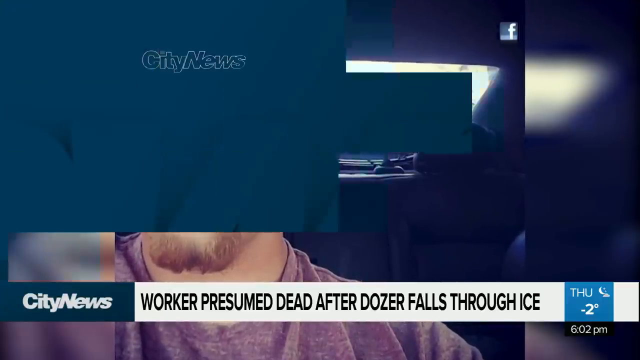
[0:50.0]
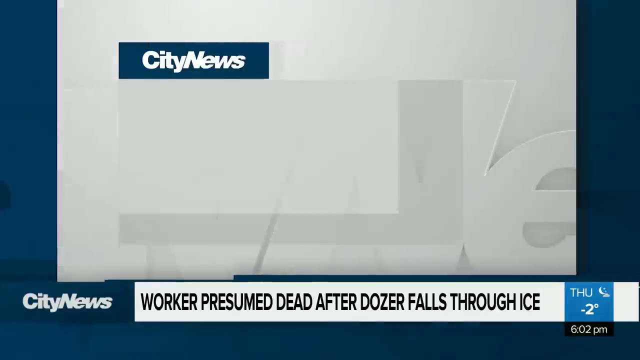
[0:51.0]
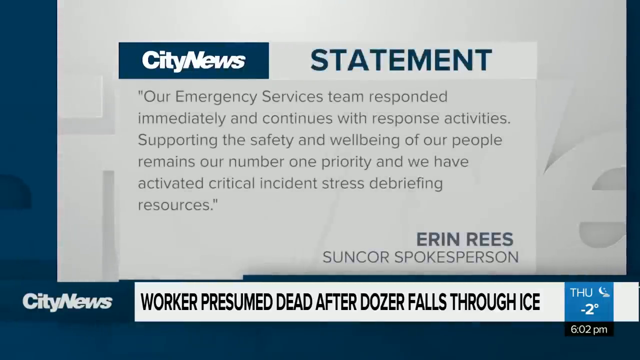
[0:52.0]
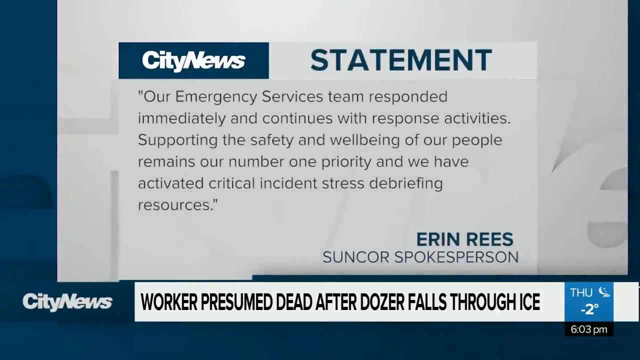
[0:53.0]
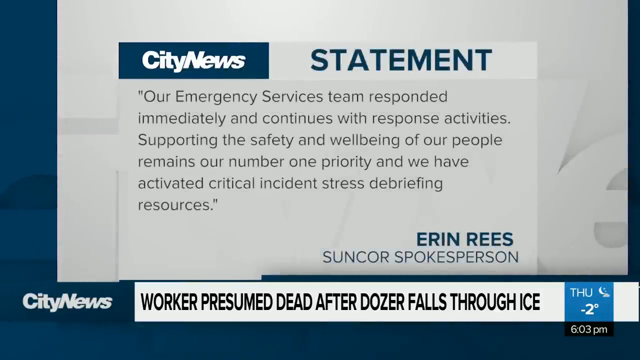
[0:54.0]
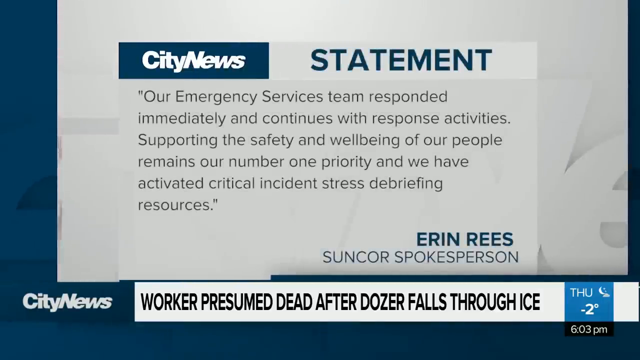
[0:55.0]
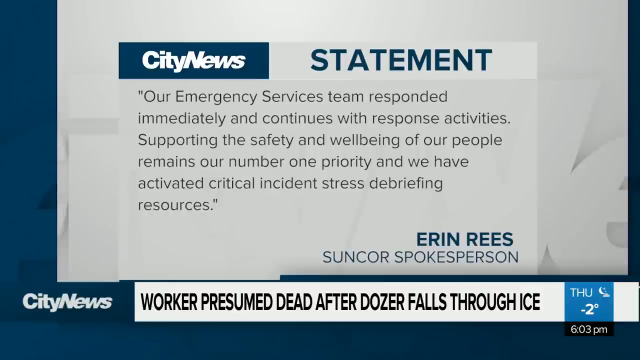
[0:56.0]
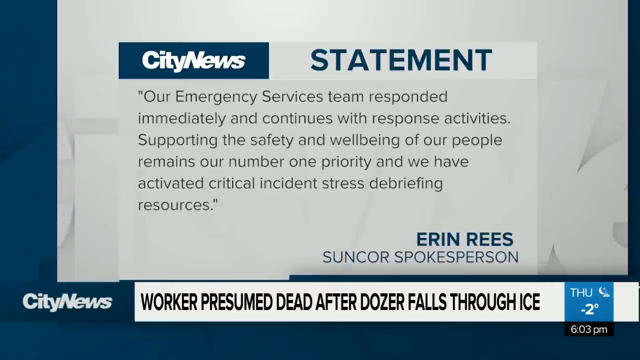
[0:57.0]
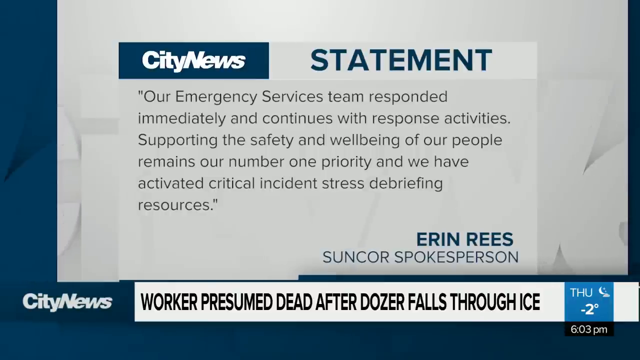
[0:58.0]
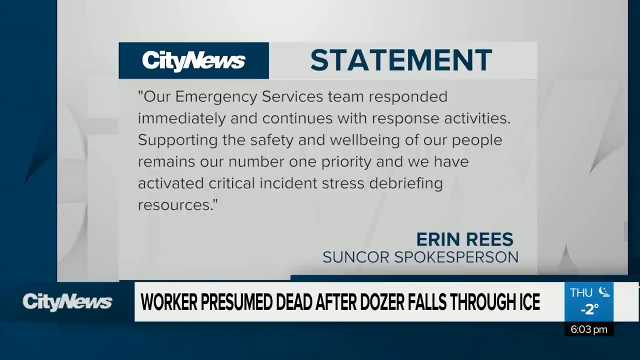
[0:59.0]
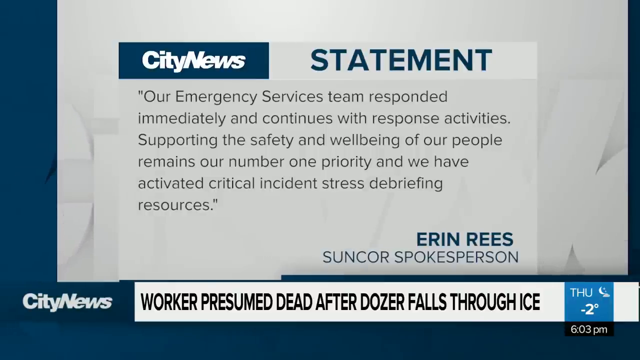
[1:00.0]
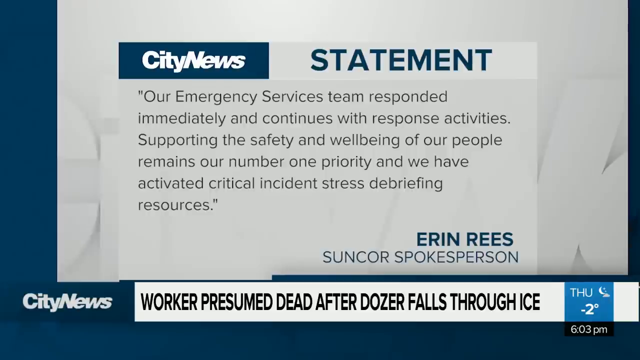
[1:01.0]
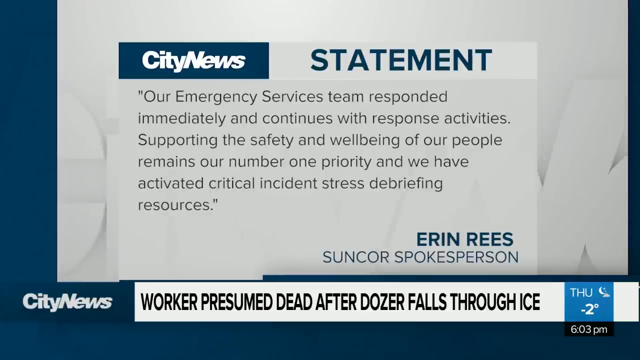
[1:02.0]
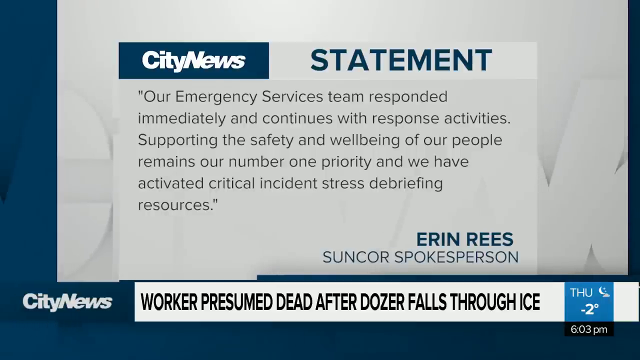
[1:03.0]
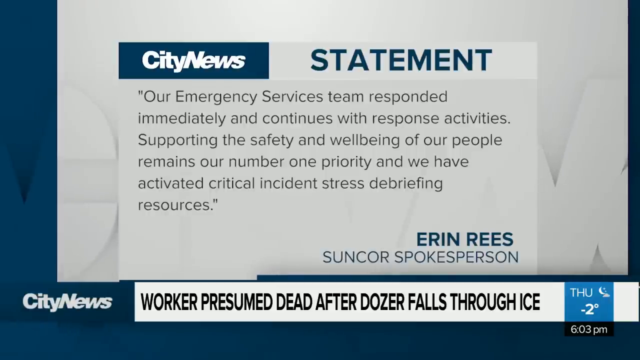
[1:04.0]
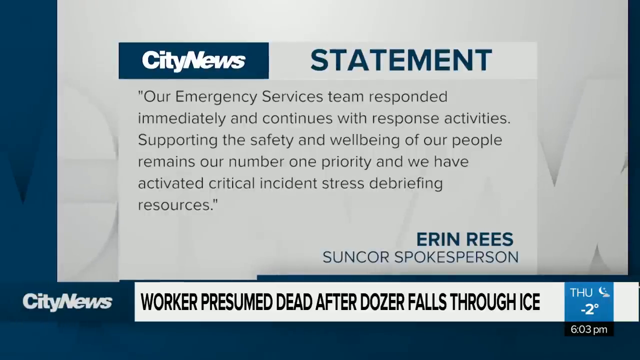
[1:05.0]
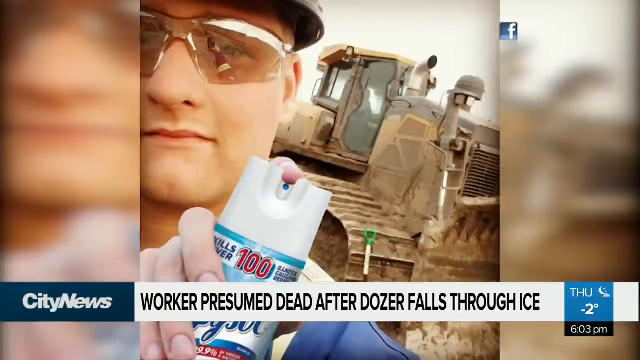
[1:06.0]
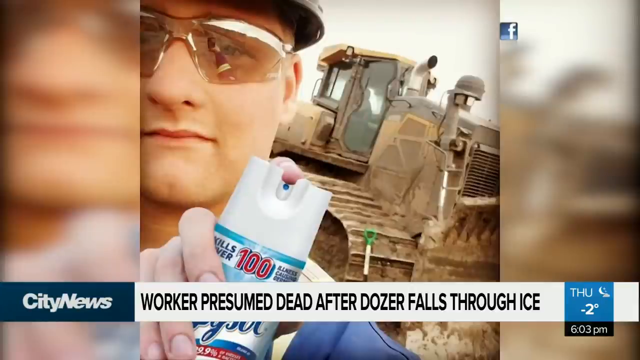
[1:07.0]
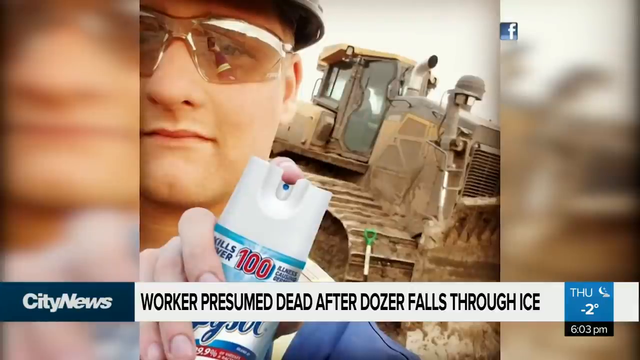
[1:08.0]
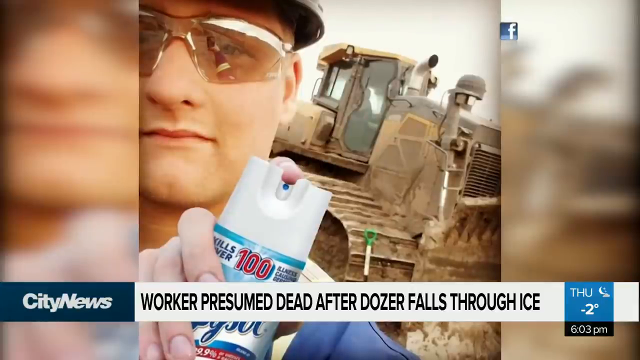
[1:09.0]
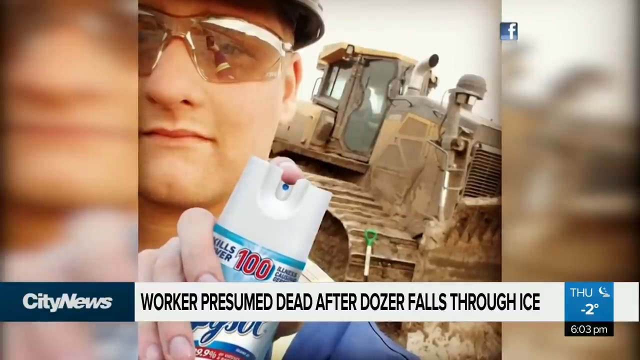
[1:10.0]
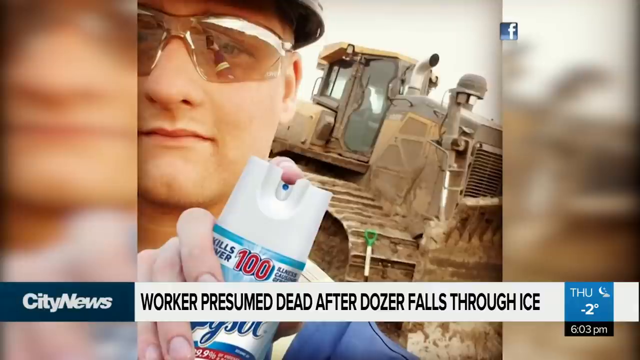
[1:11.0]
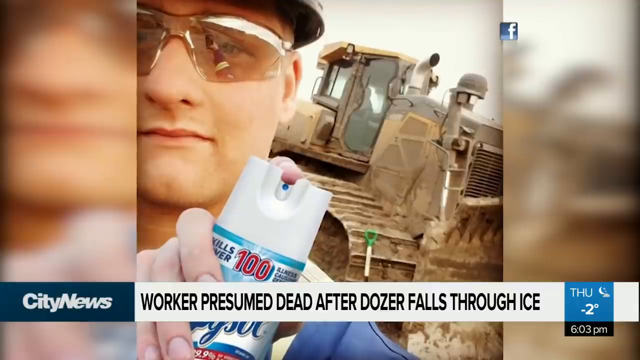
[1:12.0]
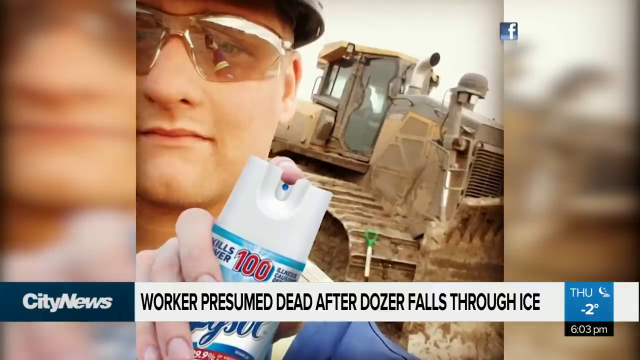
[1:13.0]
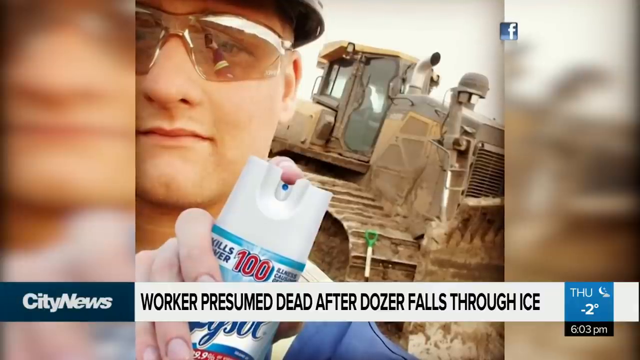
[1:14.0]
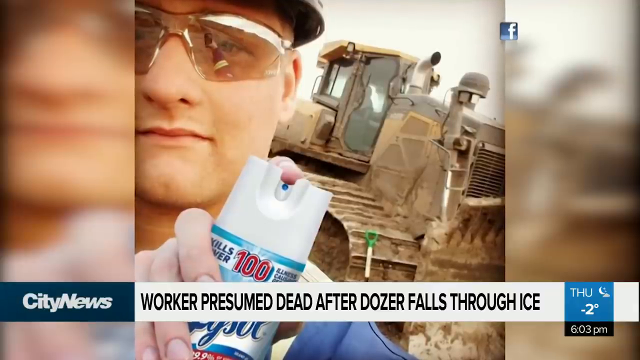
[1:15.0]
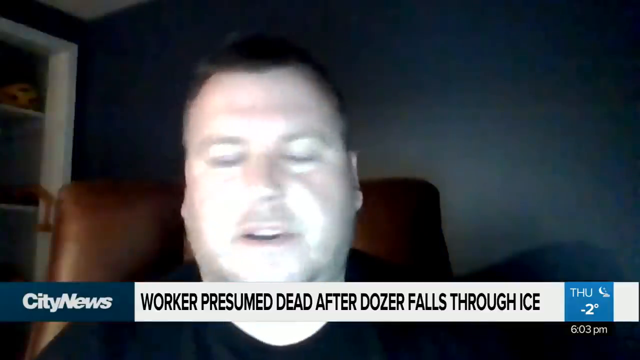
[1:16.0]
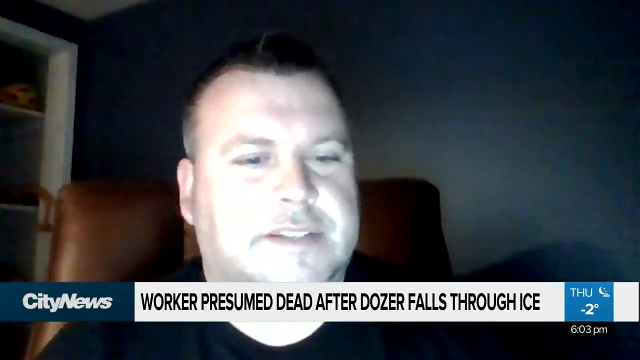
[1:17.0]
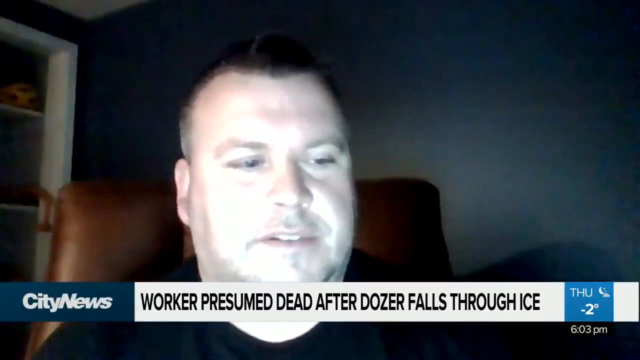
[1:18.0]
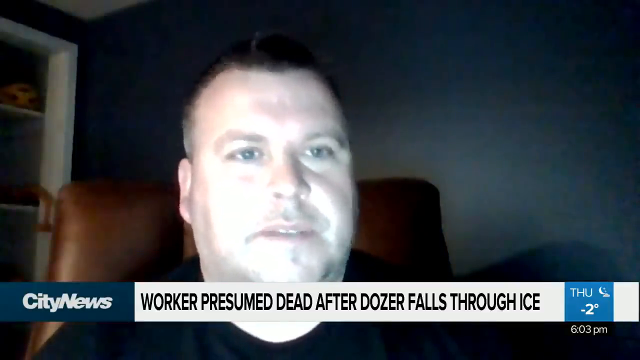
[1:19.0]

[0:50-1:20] A graphic with a blue background is overlaid with a white box that has the City News logo at the top and the word "statement" underneath in black lettering. It reads: "our emergency services team responded immediately and continues with response activities, supporting the safety and well-being of our people remains our number one priority and we have activated critical incident stress debriefing resources." The statement is attributed to Eric Leis, a Suncor spokesperson. Underneath is the headline "worker presumed dead after dozer falls through ice," and the City News graphic in blue is in the bottom left corner. Facebook pictures of the worker follow, showing him standing in front of his bulldozer in his construction uniform with a can of Lysol facing the camera. The shot ends with Joey St. Armand on a Zoom call with the news reporter.